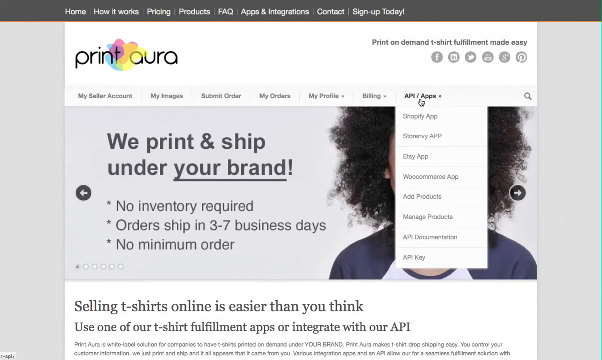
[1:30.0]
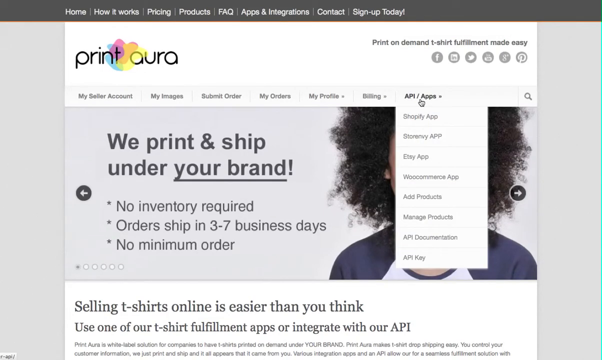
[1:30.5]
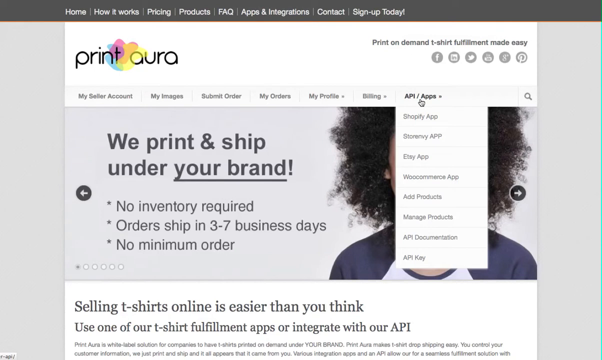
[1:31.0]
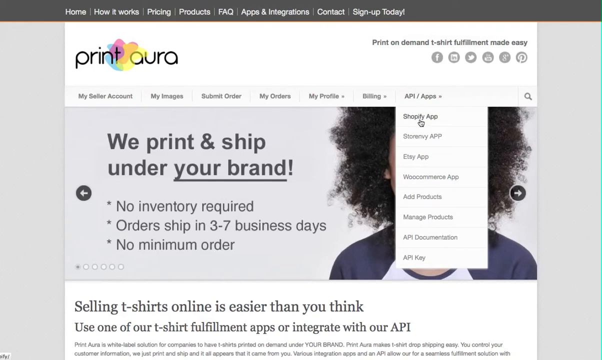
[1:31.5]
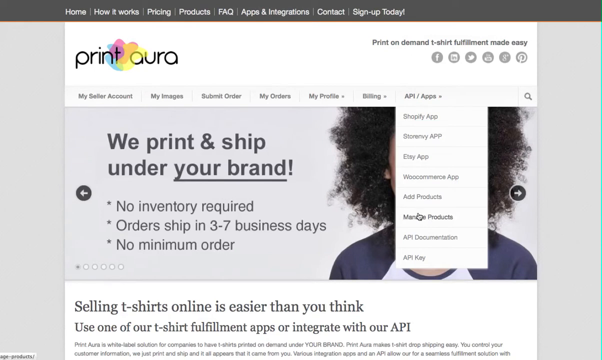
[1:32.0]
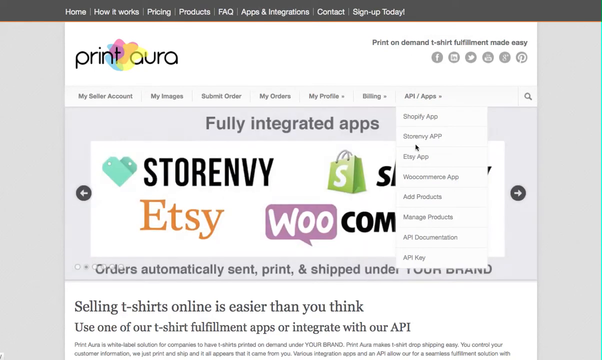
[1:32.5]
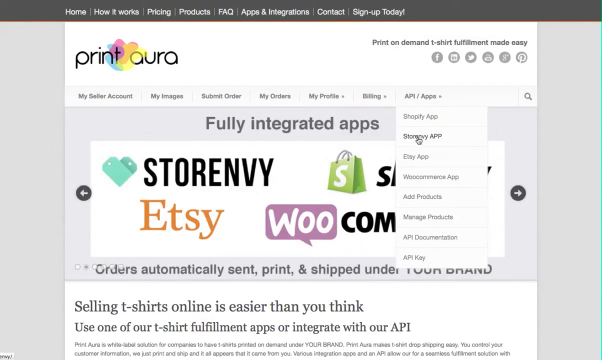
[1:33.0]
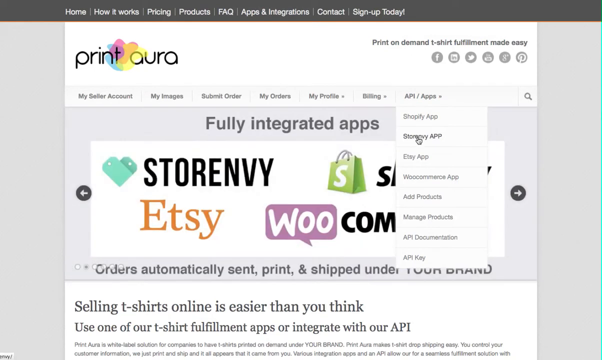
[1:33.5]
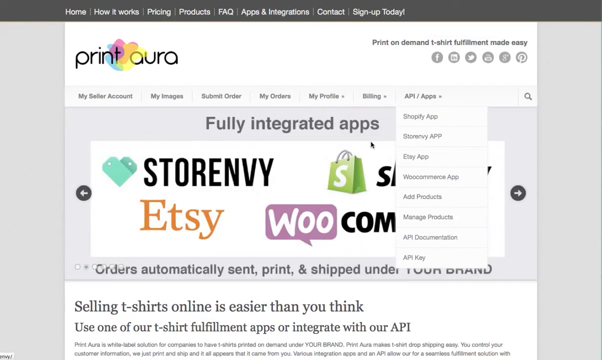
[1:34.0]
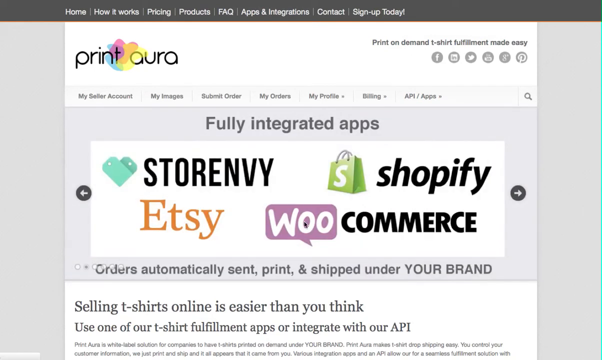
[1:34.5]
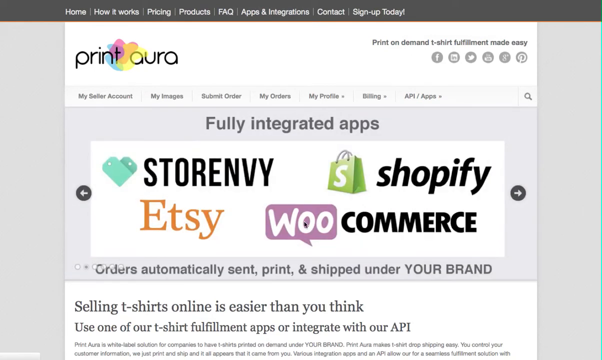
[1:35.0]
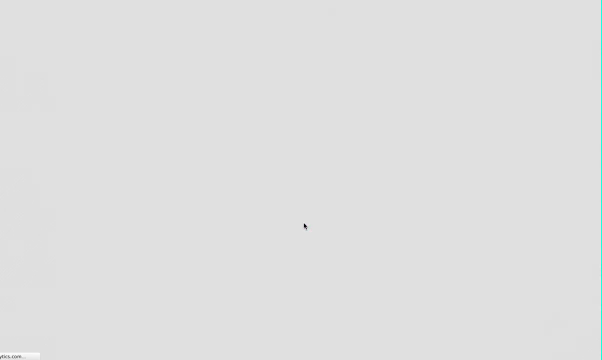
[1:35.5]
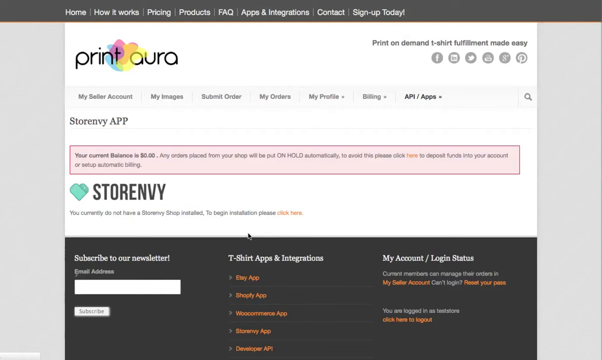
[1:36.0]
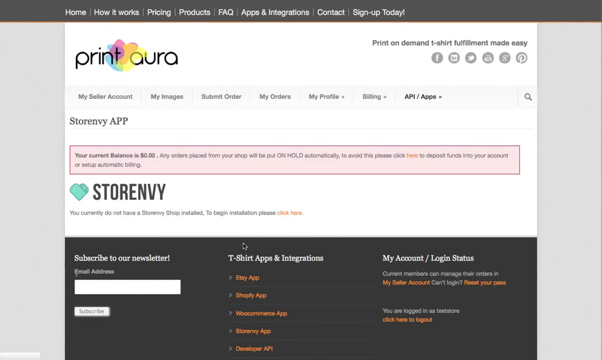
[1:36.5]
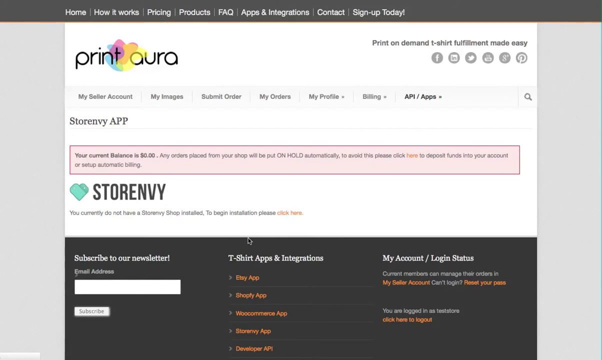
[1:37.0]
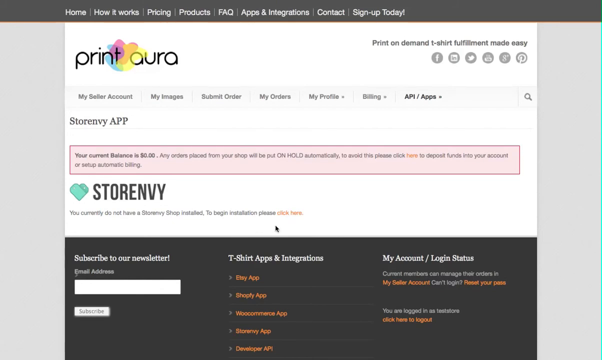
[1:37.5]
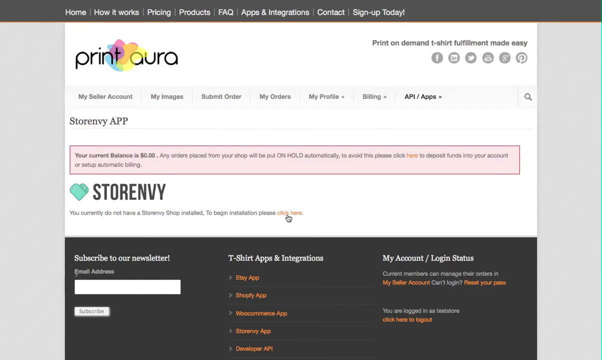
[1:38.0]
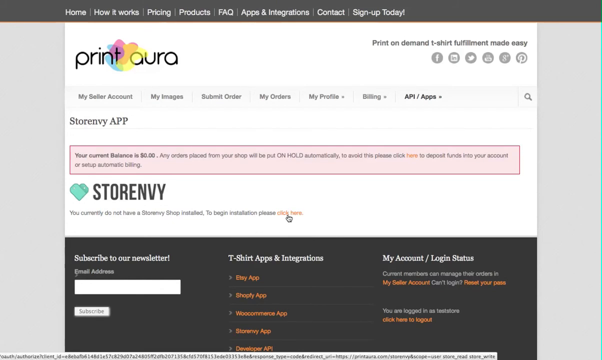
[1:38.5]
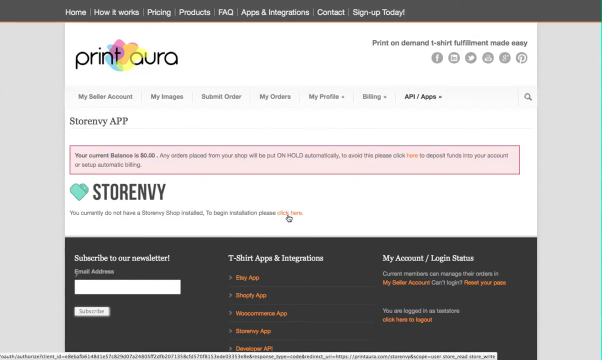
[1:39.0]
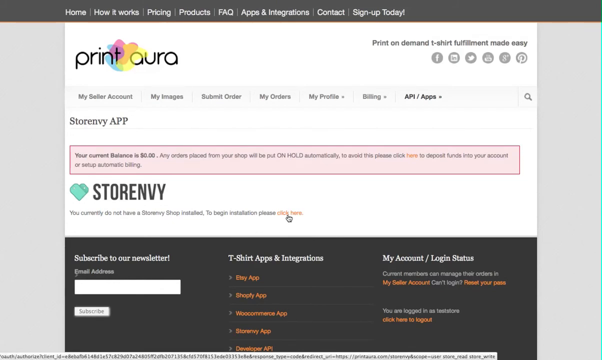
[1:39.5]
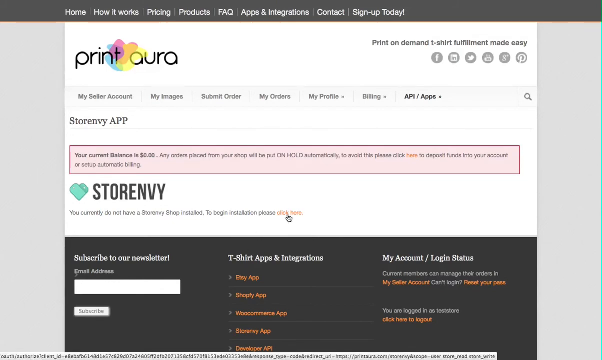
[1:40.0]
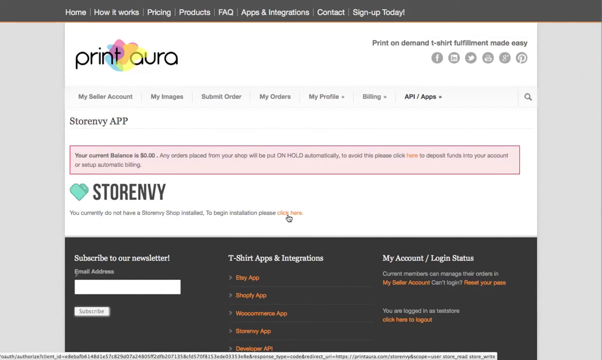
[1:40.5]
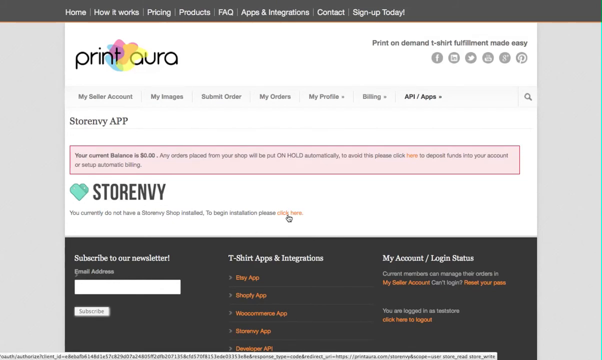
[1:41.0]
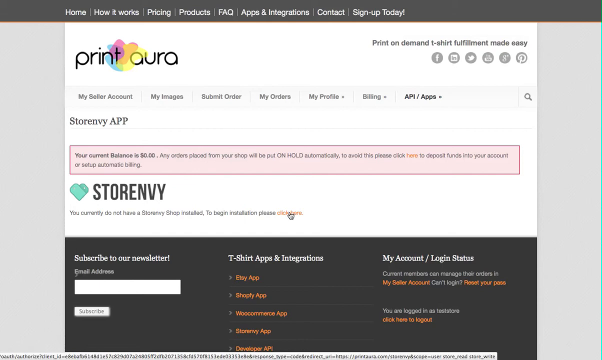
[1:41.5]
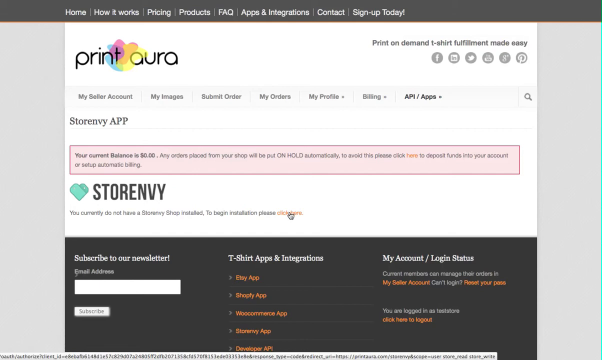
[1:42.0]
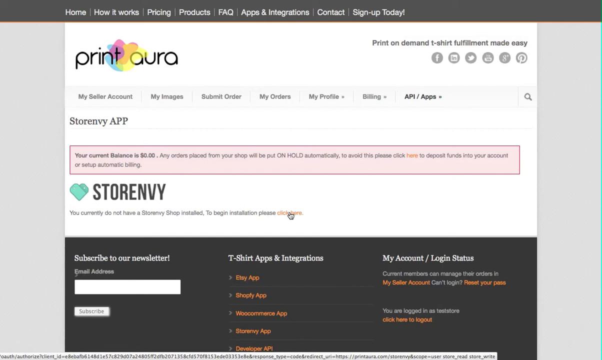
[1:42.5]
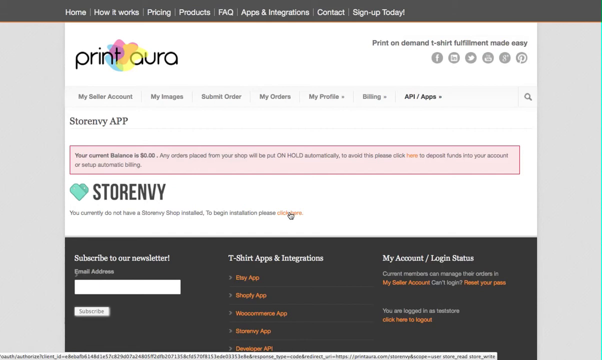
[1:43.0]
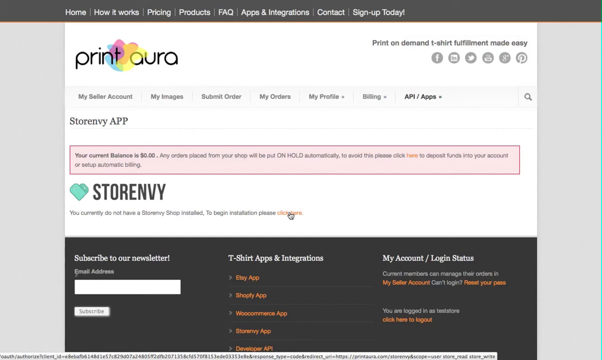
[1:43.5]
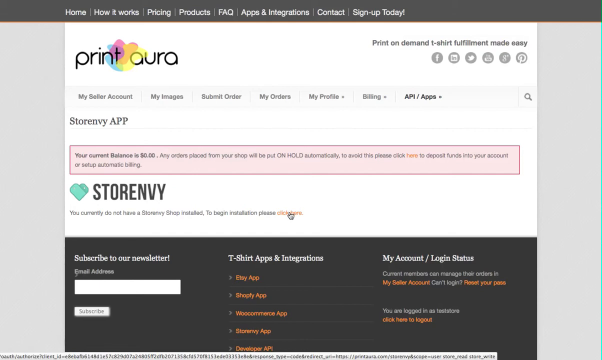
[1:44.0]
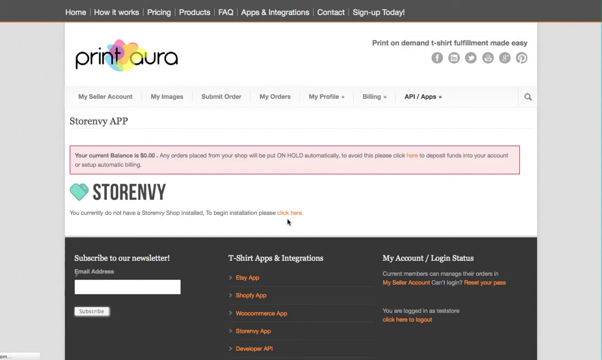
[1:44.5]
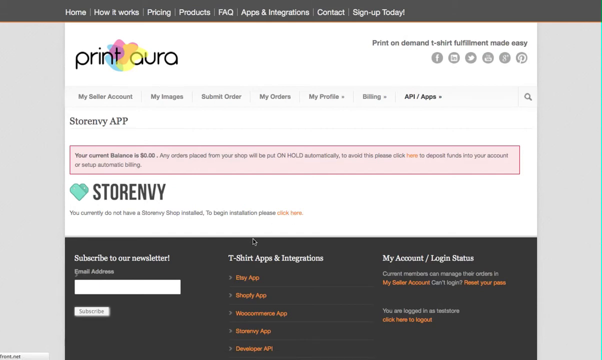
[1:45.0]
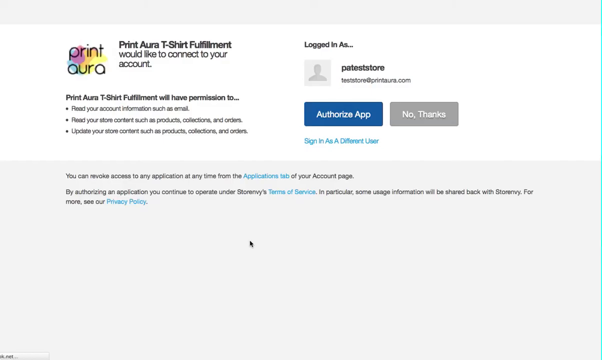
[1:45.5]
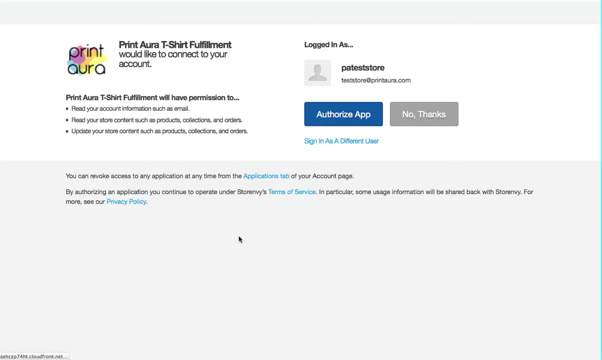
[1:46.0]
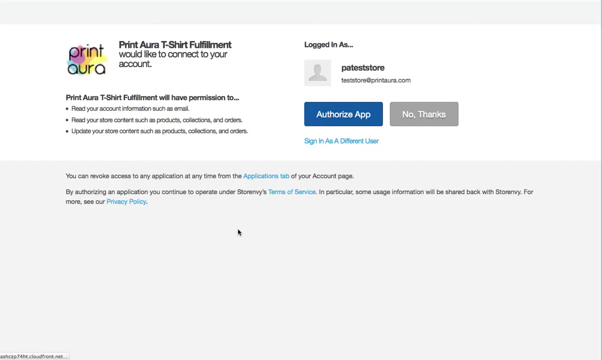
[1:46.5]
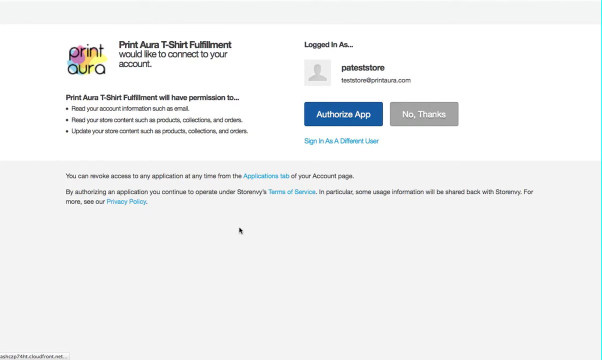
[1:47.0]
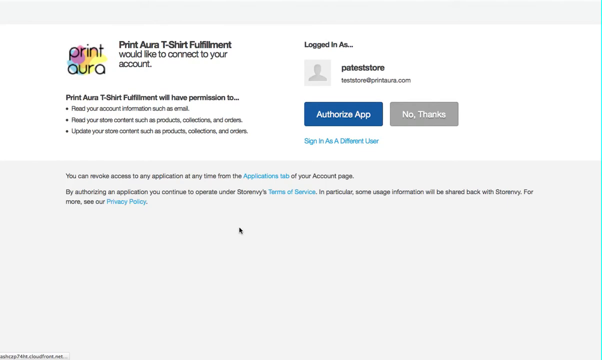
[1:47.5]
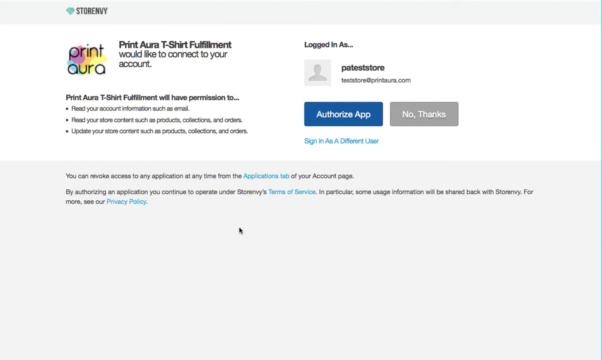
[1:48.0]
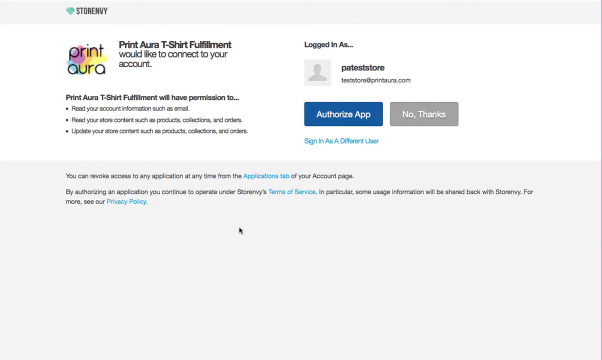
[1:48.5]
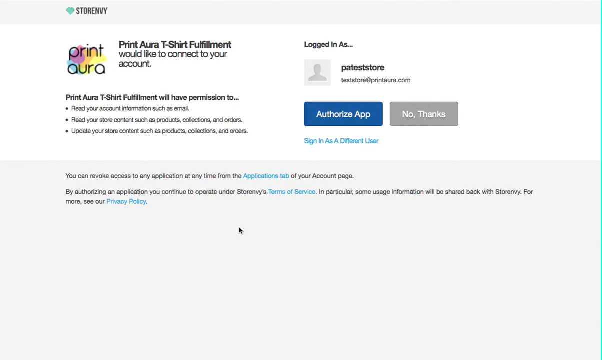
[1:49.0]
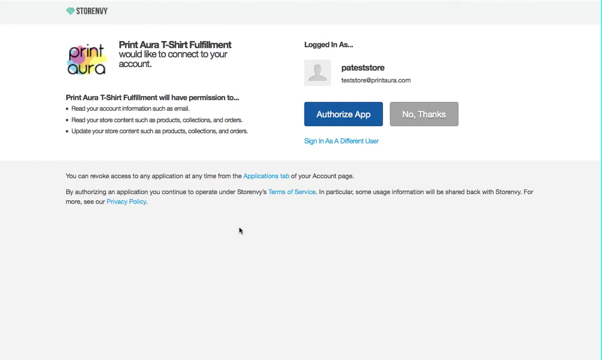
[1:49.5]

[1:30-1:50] The user hovers over "API and apps," which opens a dropdown with many options. They click a button that takes them back to the PrintAura store page, which shows "your current balance" of zero on a red background. Next they are about to click the "begin installation" button. A new screen then reads "PrintAura t-shirt fulfillment would like to connect to your account," which looks like an integration. On the right-hand side it reads "logged in as PA test store." Beneath are a blue button reading "authorize app," a gray "no thanks" button to its right, and below them blue text reading "sign in as a different user." On the left-hand side it reads "PrintAura t-shirt fulfillment will have permission to" followed by bullet points: "read your account information such as email" and "read your store."